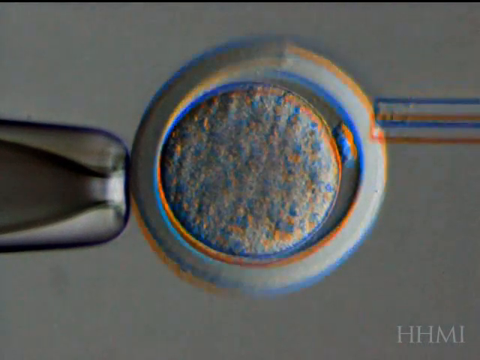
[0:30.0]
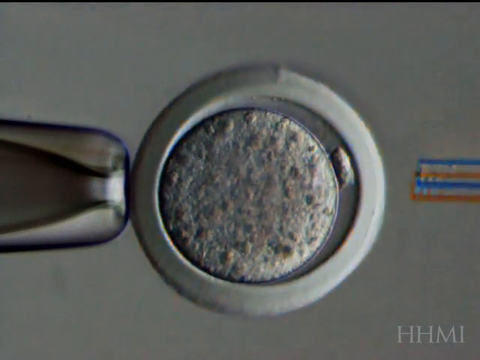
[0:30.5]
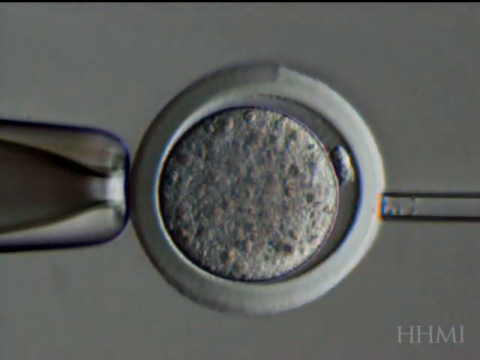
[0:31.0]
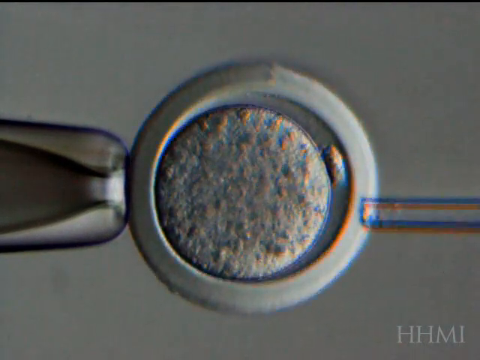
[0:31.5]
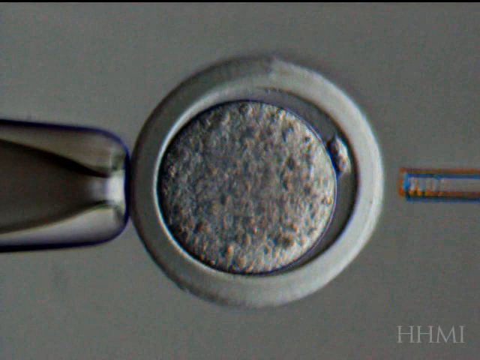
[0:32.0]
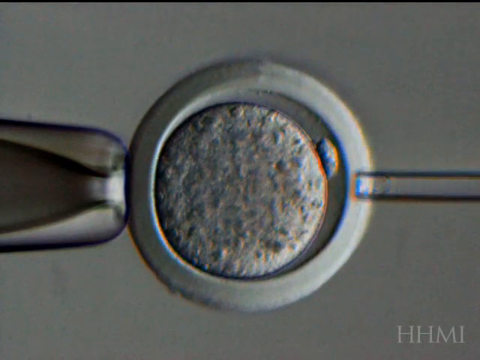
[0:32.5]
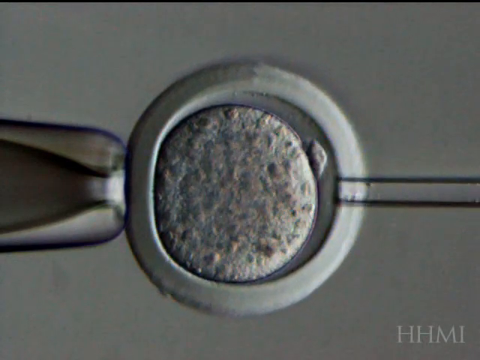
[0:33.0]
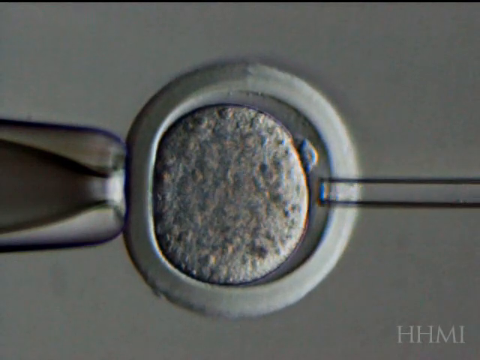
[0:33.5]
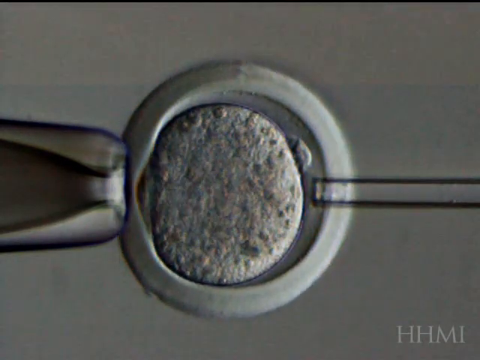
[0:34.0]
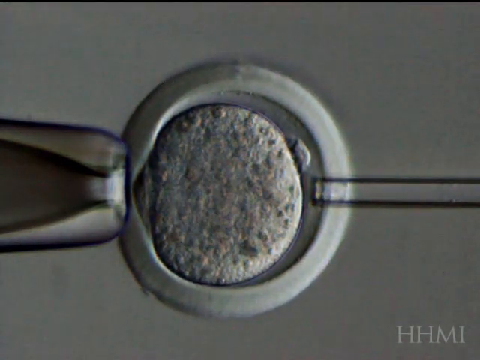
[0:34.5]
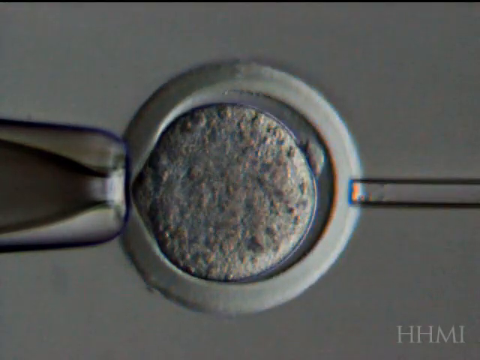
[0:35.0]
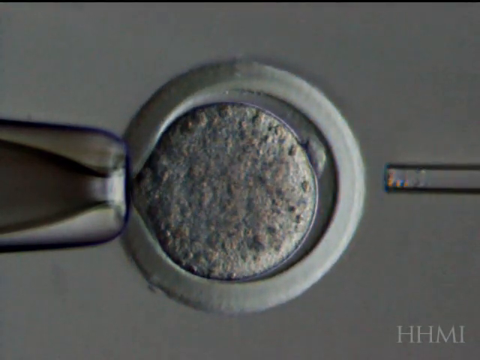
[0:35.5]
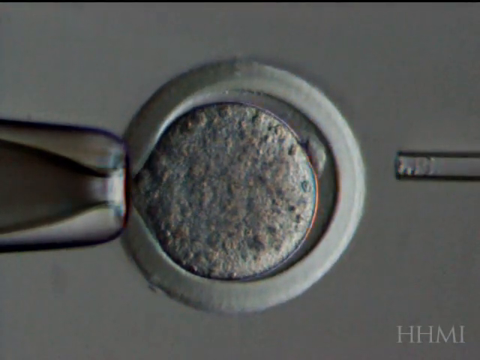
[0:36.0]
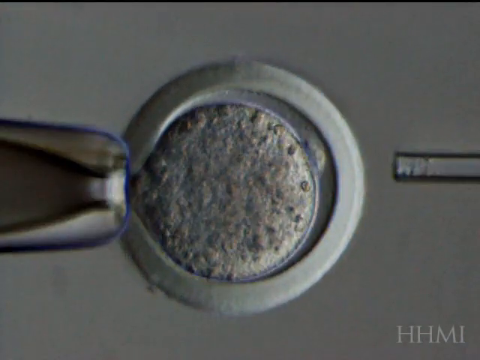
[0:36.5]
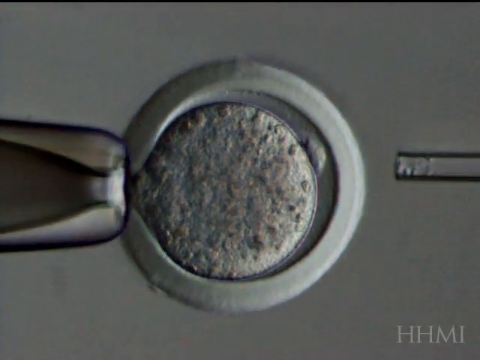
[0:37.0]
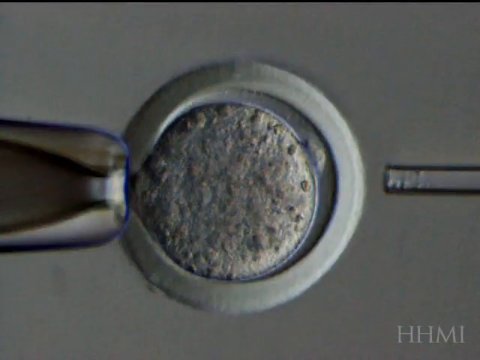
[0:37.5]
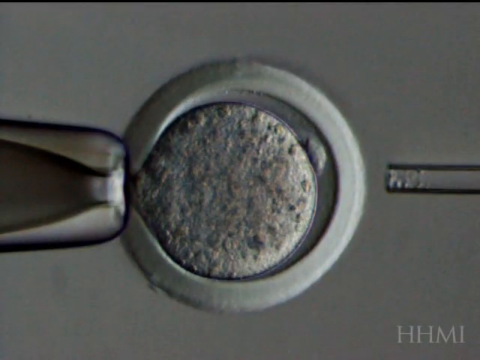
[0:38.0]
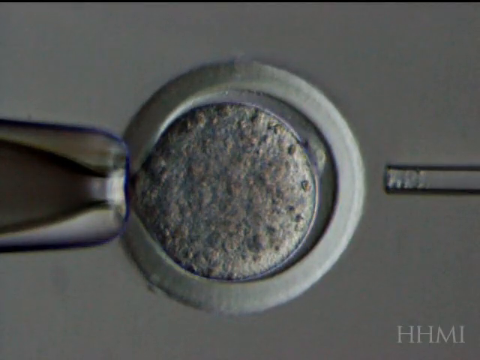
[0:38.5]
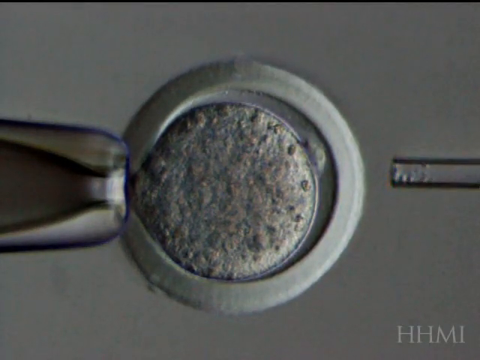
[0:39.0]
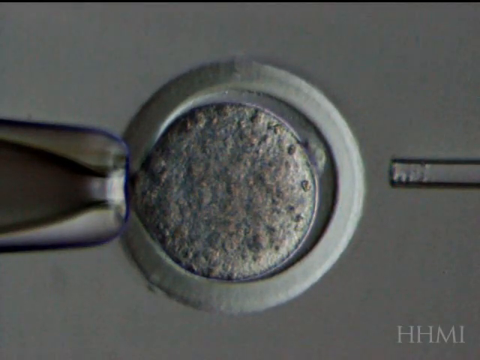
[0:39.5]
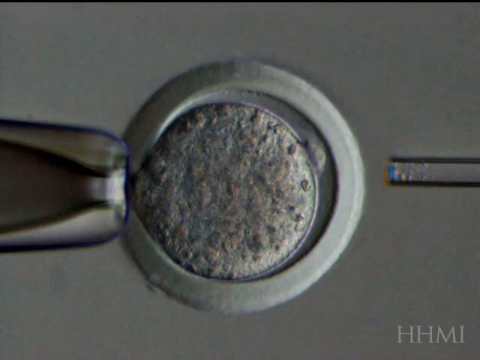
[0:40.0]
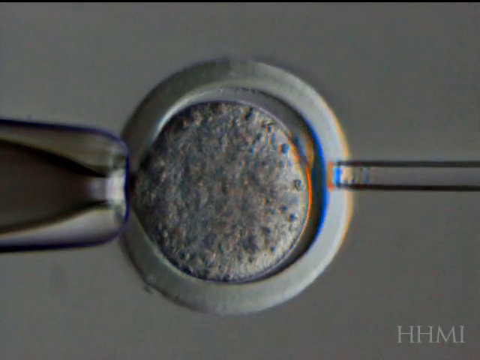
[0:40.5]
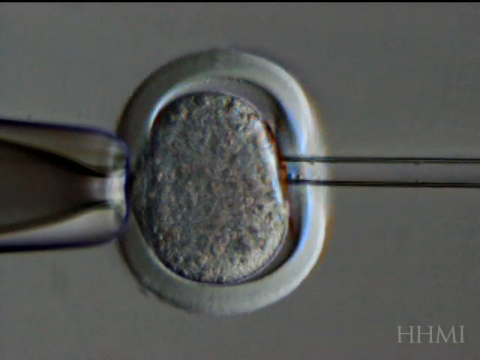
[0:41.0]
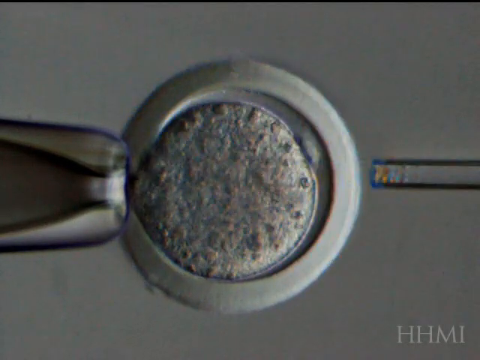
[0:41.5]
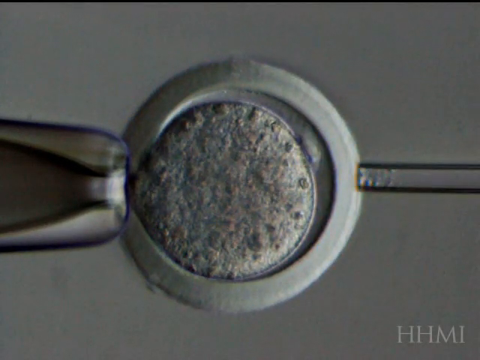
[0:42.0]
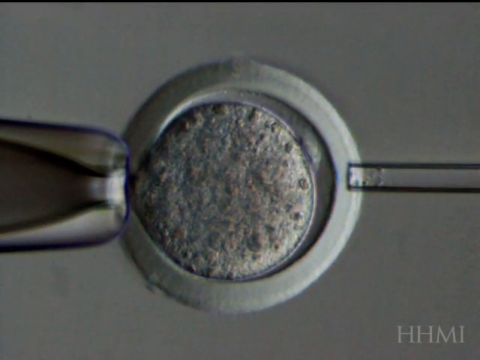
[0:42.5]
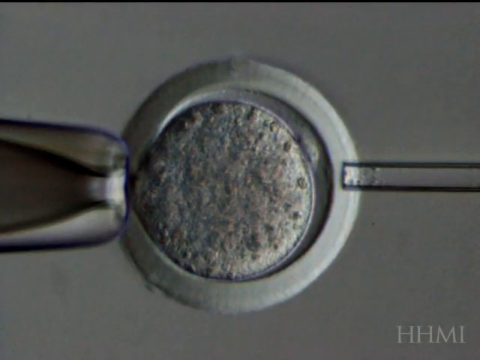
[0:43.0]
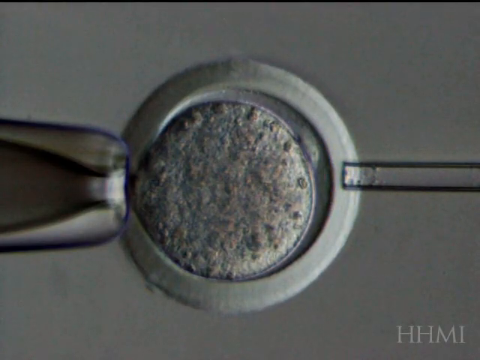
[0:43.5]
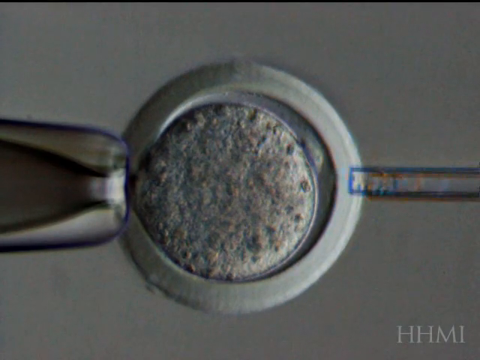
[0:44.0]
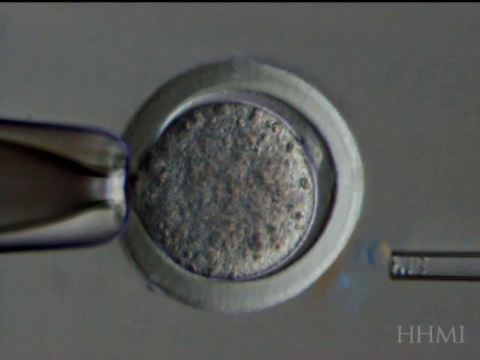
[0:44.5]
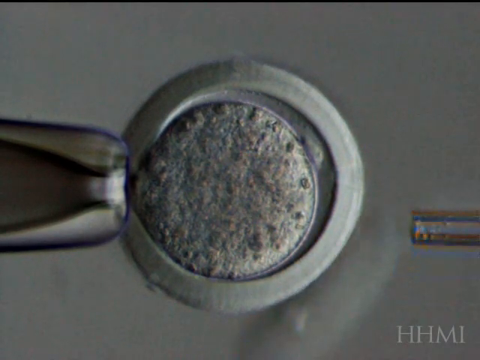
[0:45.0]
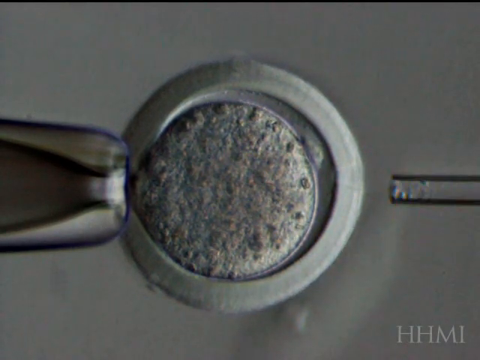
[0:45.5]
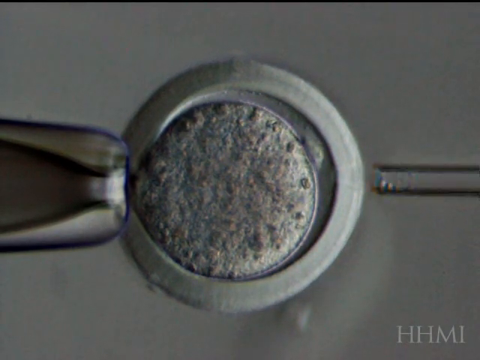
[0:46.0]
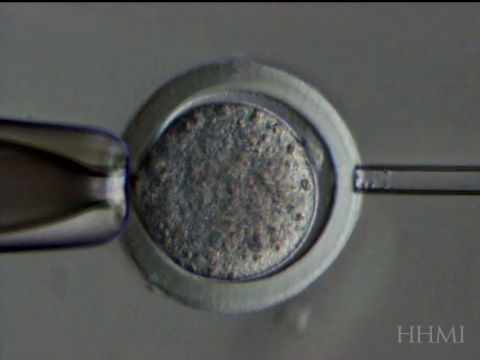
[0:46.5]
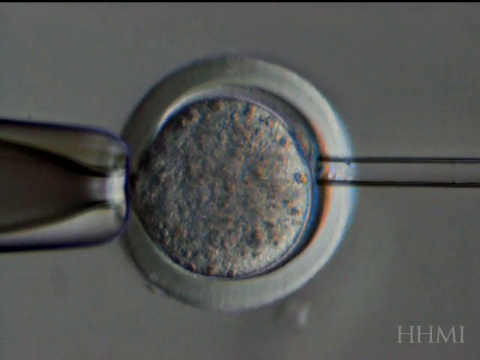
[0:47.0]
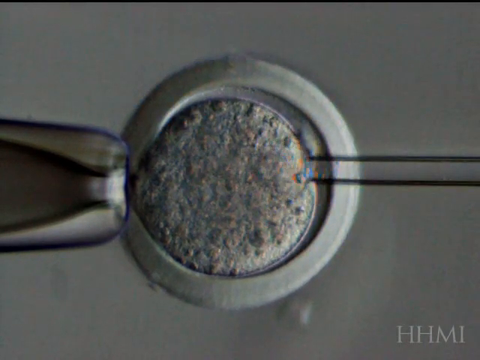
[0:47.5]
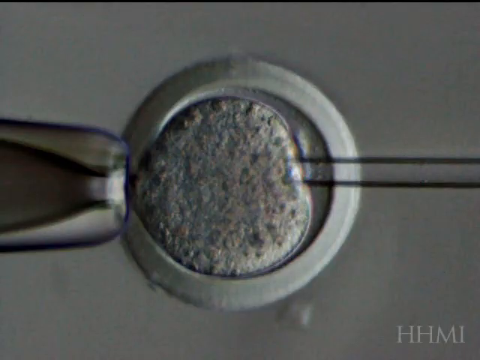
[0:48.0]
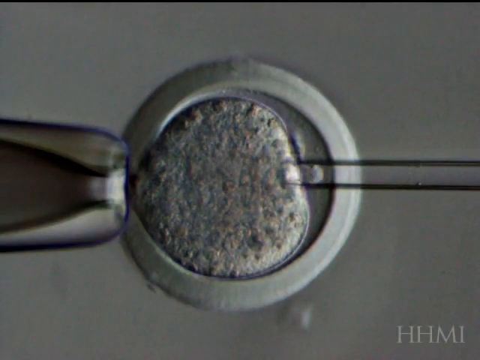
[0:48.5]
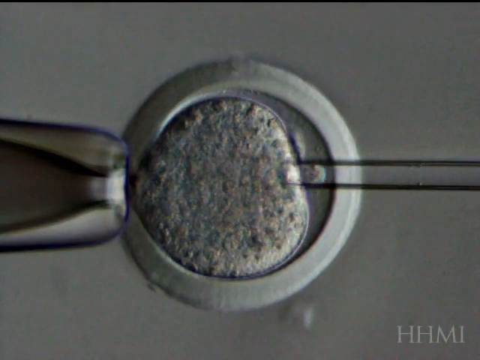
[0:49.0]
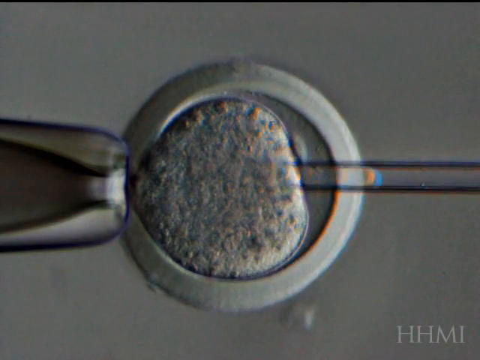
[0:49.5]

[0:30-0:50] The metal ring is still on the outside. The glass object on the left seems to penetrate the circle, and as it does, it pushes and breaks the membrane of the inner circle, so the gray substance starts getting pushed and almost sucked into the metal tip of the left object. The circles are malleable and slightly squishy but also slightly resistant. The glass object on the left then pushes all the way into the outer circle and through the inner circle, and some of the grayish, chalky, powdery-looking substance in the center appears to be pulled into the glass-looking object. As it is expelled from the glass object, it leaves a foggy white film that is more gray in color and blends in with the very gray background. The volume pulled out of the chalky white inner powder is visible as it is sucked into the glass object.